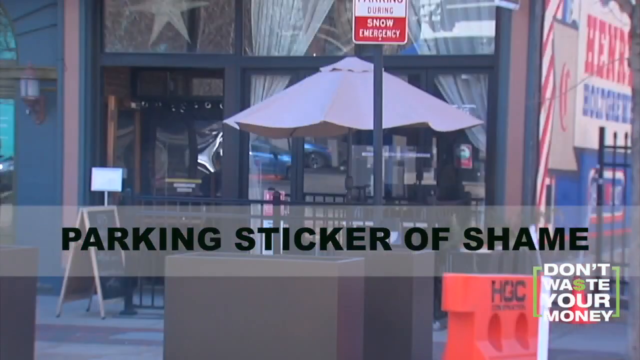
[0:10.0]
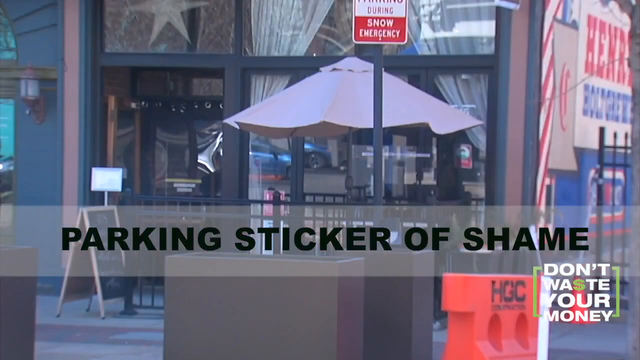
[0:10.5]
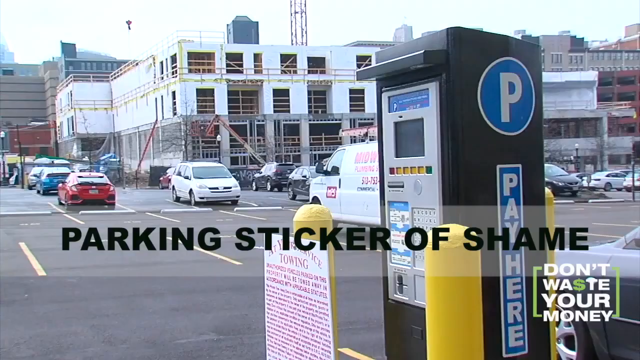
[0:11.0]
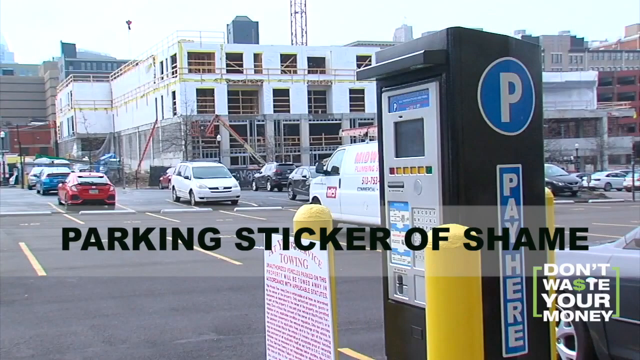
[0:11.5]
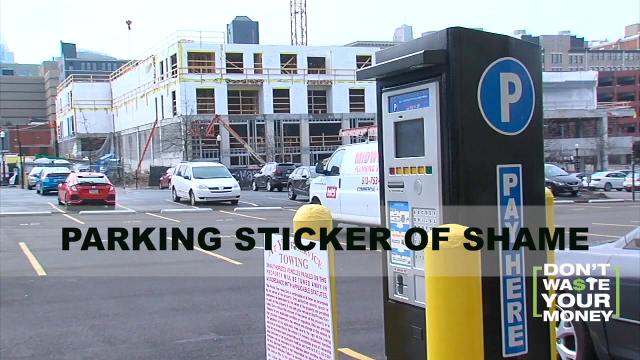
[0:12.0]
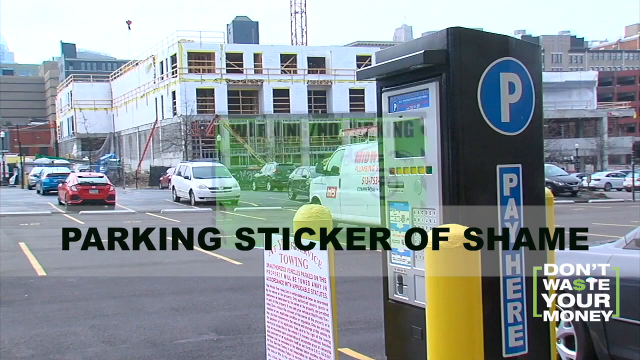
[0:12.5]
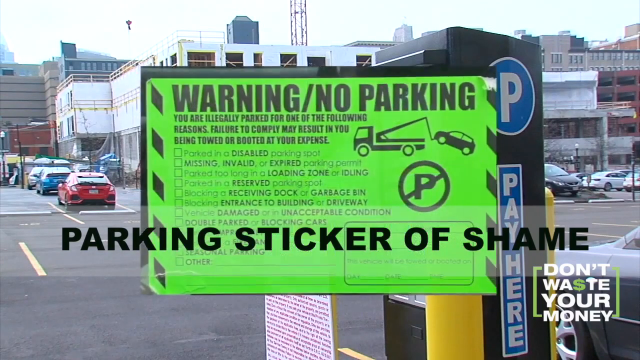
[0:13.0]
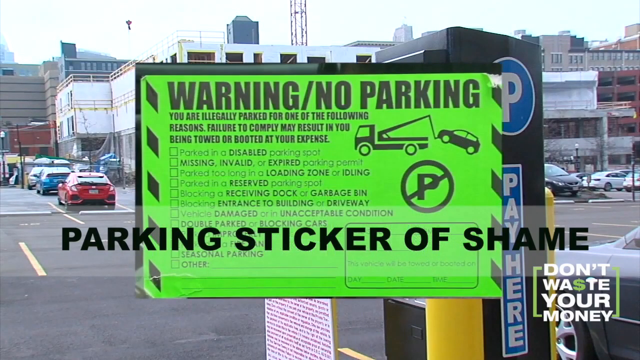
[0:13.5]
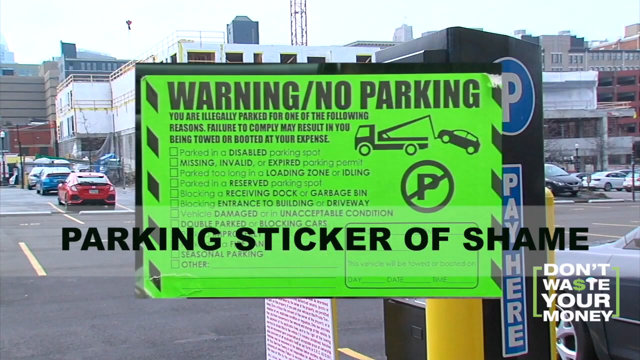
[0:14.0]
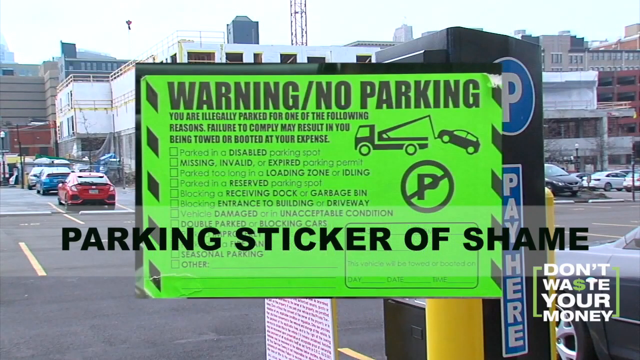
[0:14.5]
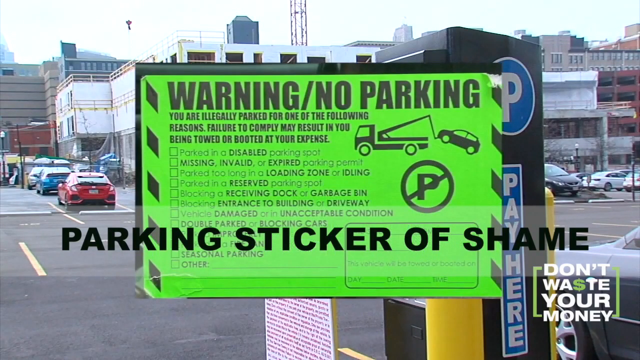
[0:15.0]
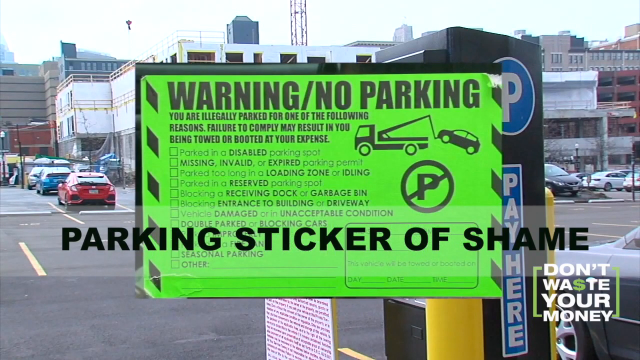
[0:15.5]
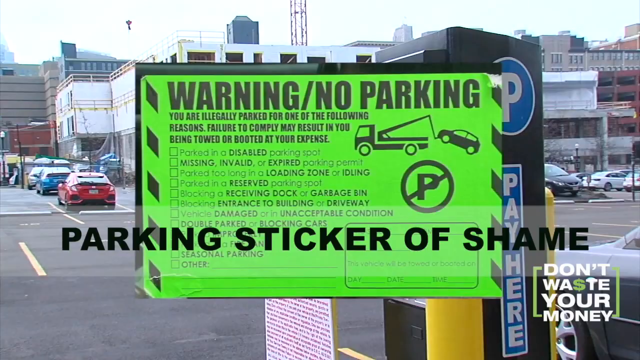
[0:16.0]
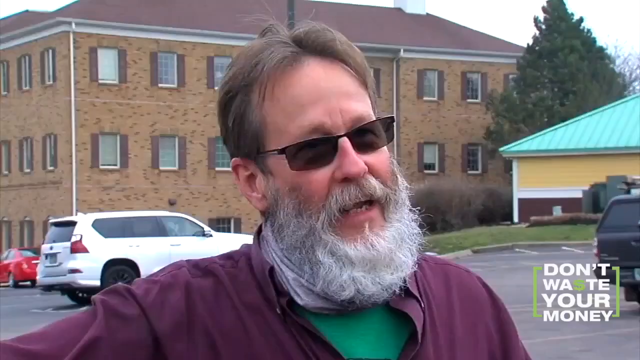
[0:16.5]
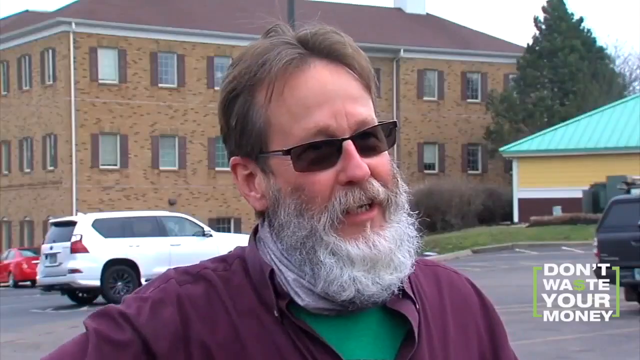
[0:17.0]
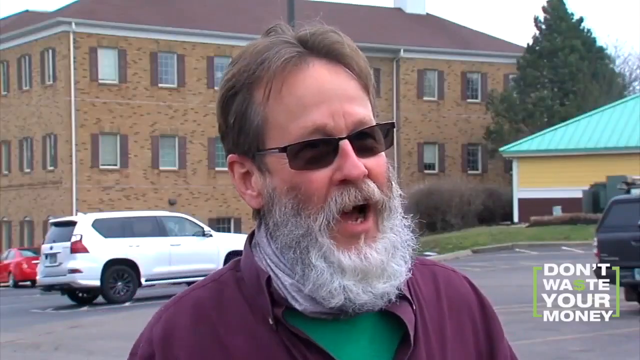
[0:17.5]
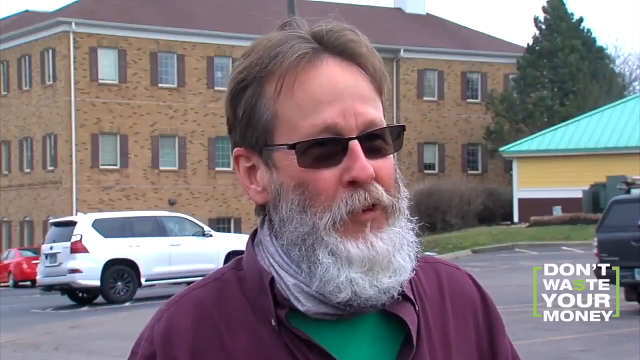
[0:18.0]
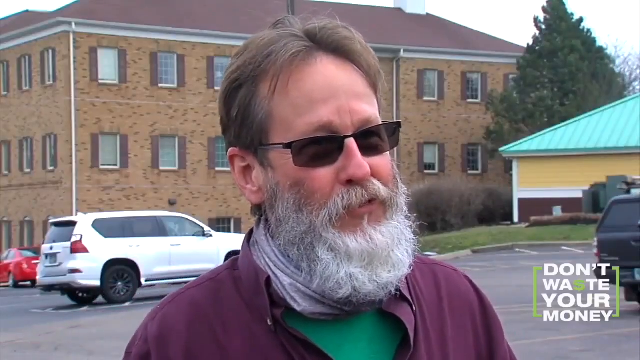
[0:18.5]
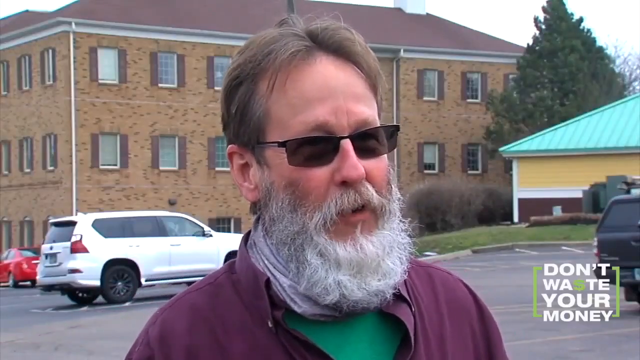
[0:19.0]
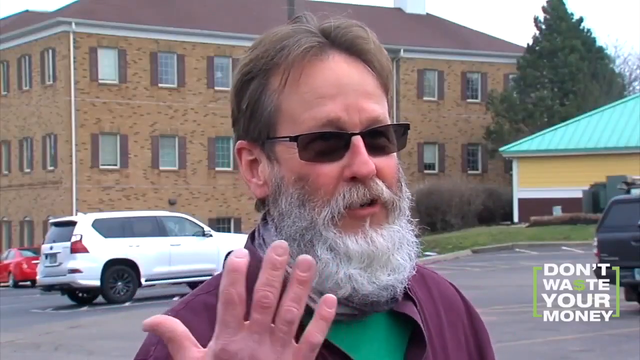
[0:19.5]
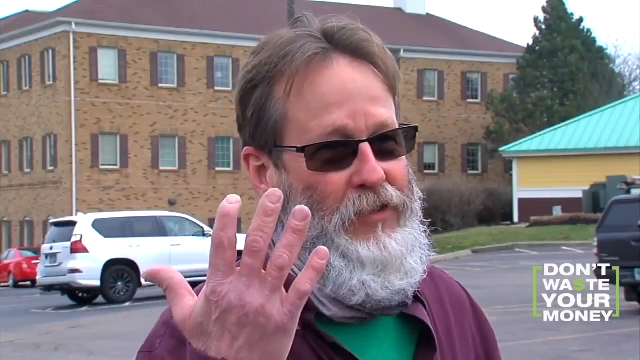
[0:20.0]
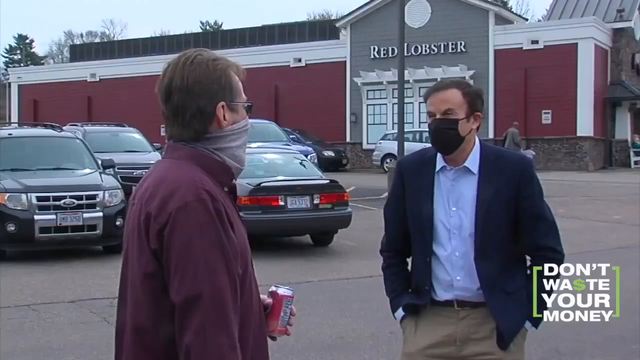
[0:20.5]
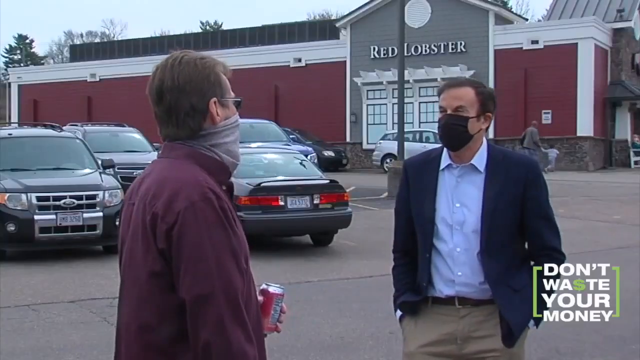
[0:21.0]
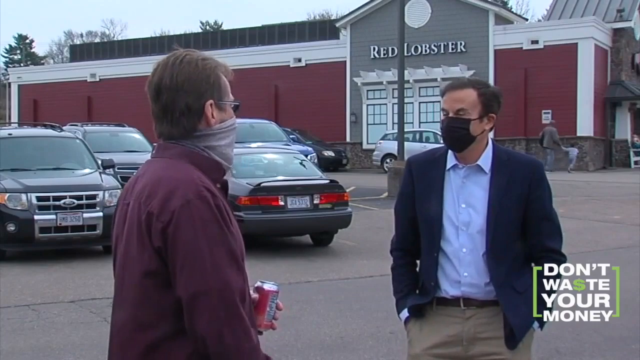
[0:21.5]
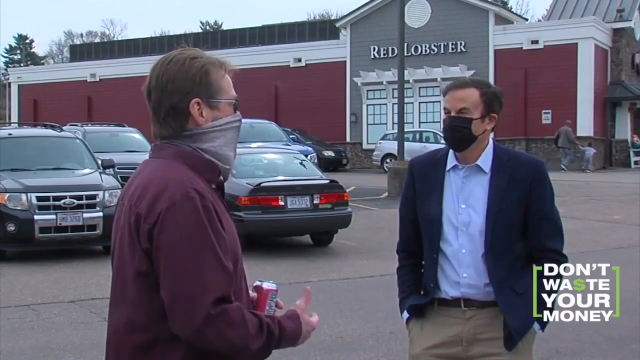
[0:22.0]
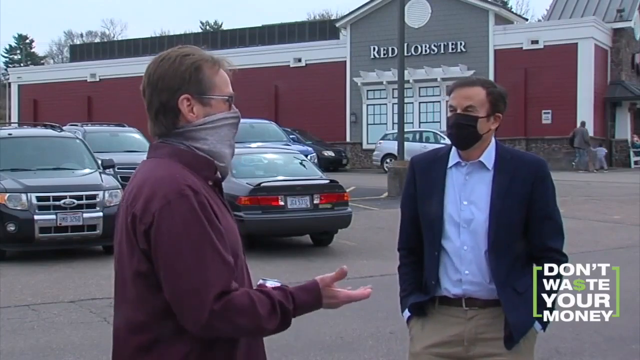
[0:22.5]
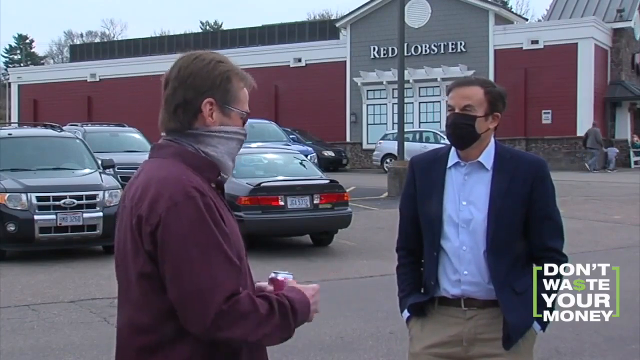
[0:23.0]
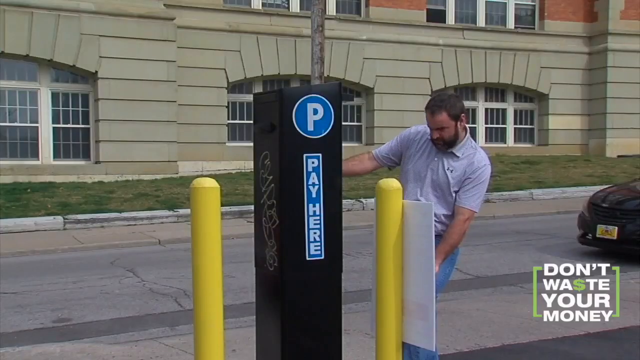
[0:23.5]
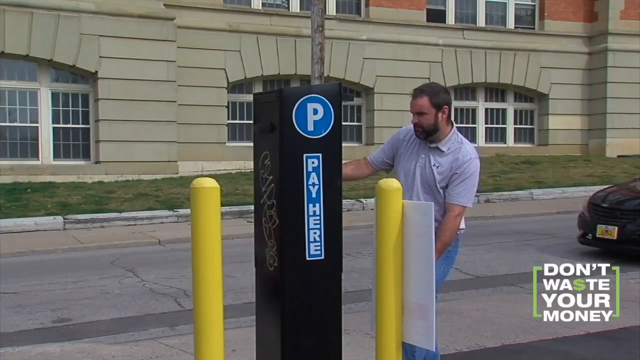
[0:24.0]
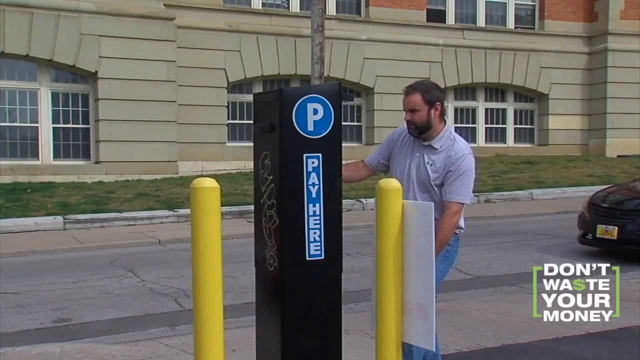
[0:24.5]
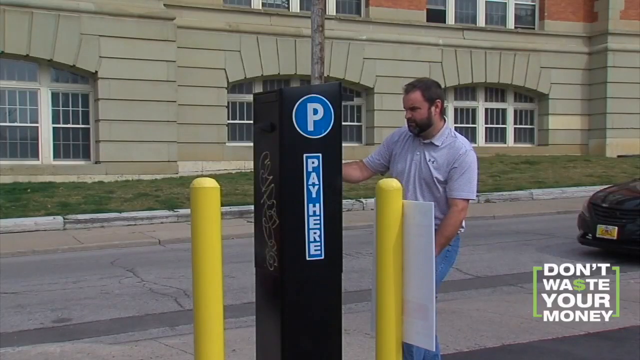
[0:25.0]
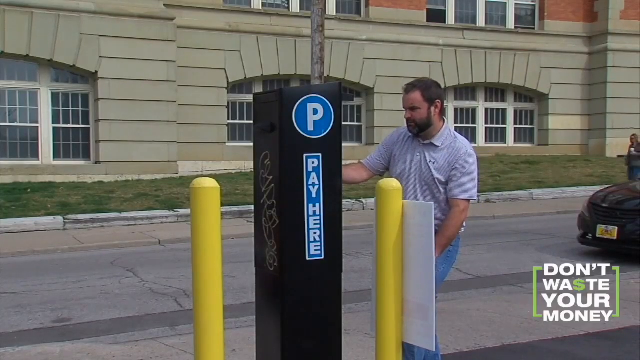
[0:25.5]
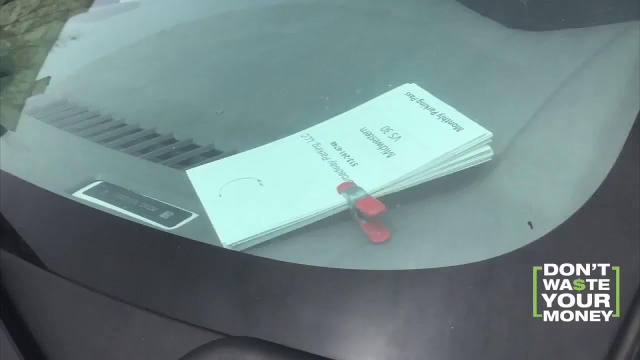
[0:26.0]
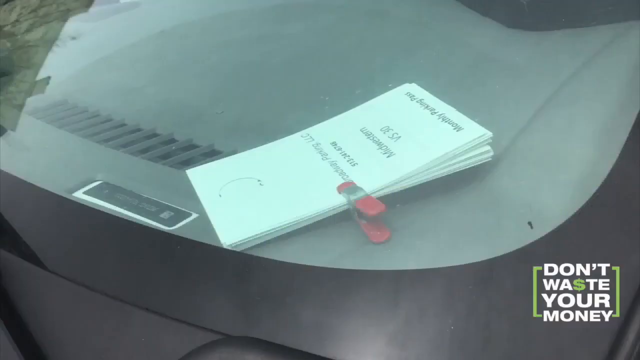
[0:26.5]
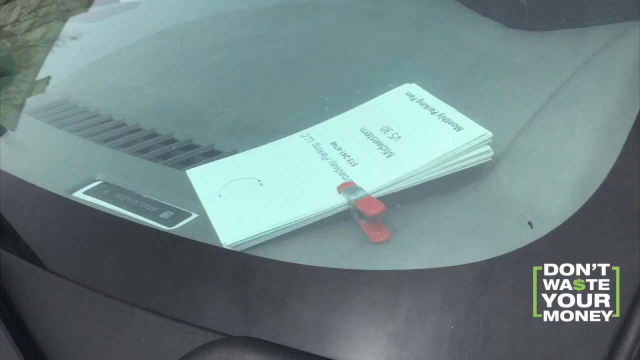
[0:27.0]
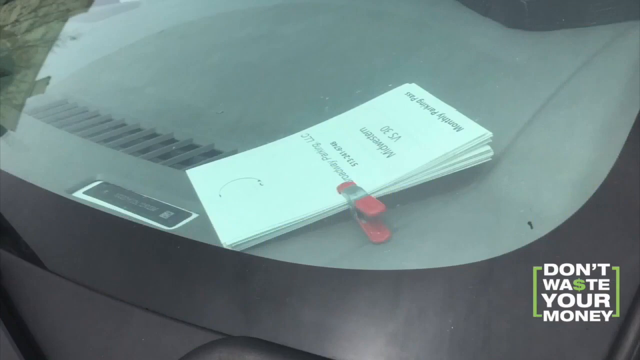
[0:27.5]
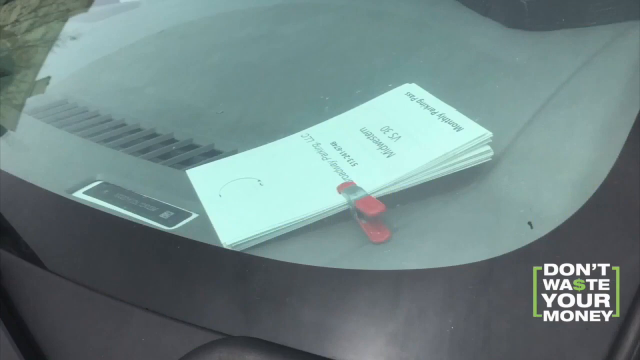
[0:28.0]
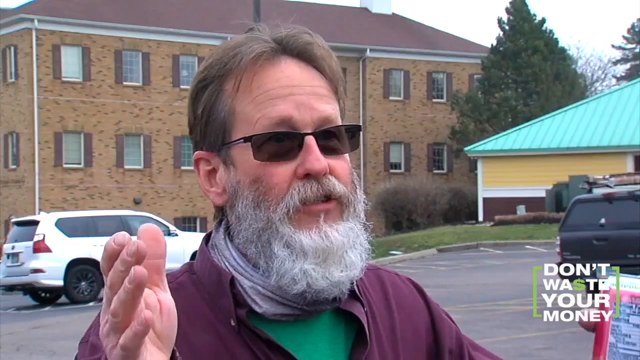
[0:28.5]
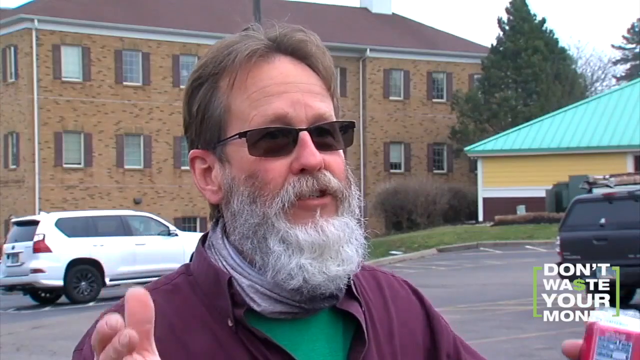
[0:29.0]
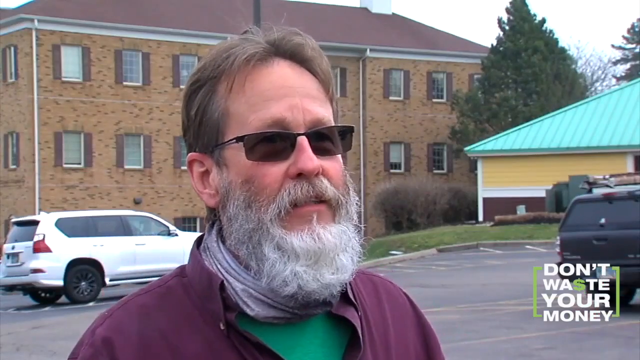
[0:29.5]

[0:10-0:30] At the start, a transparent text bar across the middle of the screen reads "Parking Sticker of Shame," and a "Don't Waste Your Money" graphic is in the lower right corner, with the S in "Waste" shown as a dollar sign. Different scenes of parking lots and parking-lot pay kiosks appear. There is also an image of a "Warning No Parking" decal that could be placed on a car. Its warning says, "You are illegally parked for one of the following reasons. Failure to comply may result in you being towed or booted at your expense," followed by a list of reasons, and it has a graphic of a car being towed away. A man is interviewed, speaking directly to someone off camera; he wears sunglasses, has a long gray beard, and stands in a parking lot with a building behind him. Another image shows two men standing in the parking lot of a Red Lobster restaurant talking to each other, both wearing face masks.